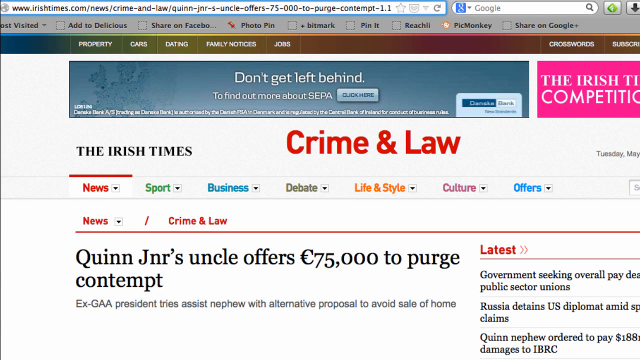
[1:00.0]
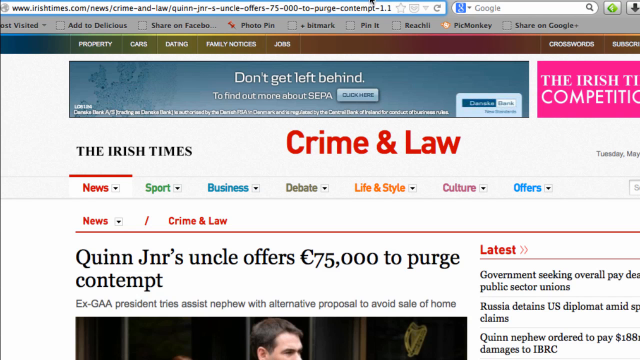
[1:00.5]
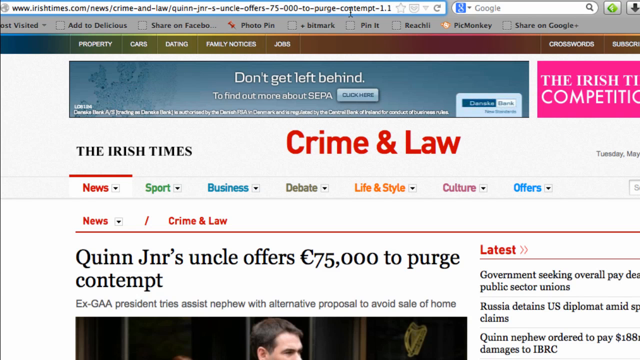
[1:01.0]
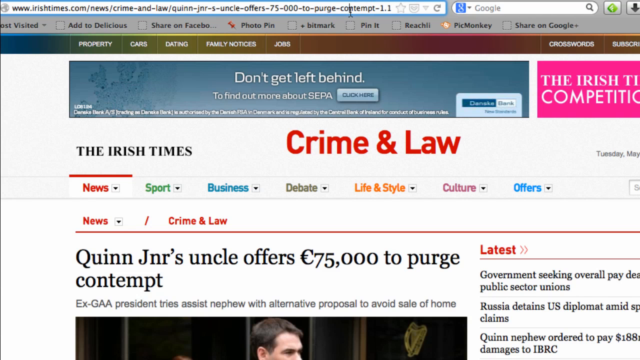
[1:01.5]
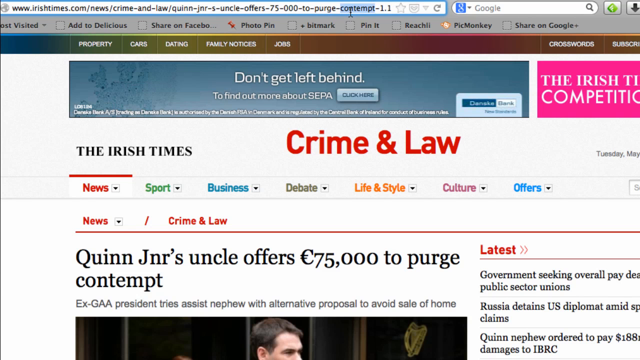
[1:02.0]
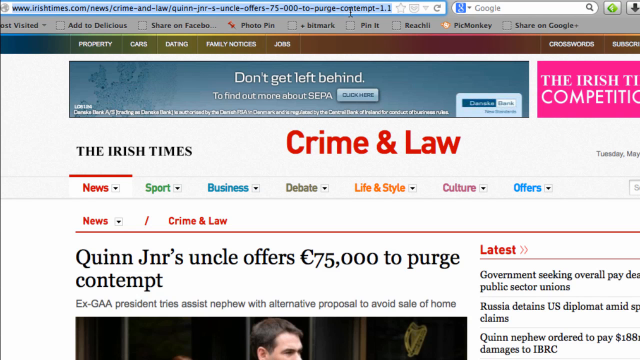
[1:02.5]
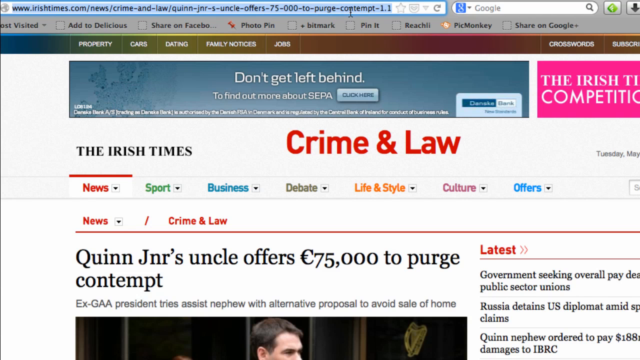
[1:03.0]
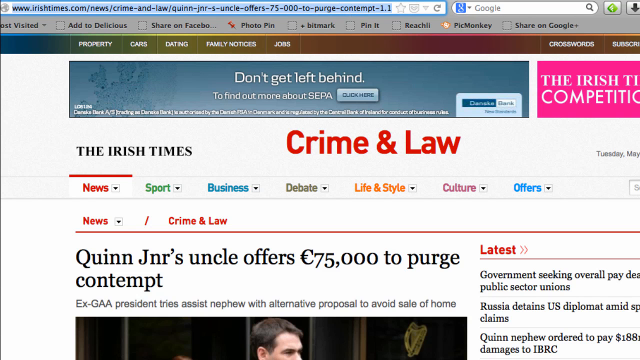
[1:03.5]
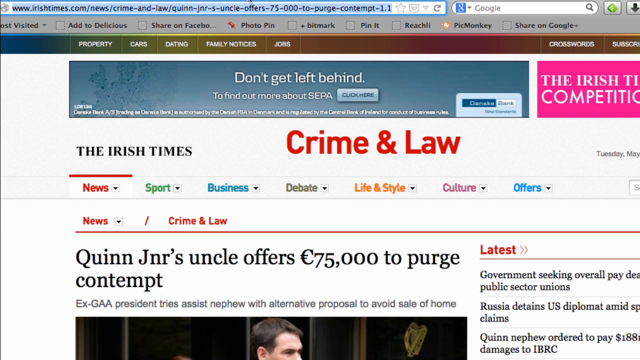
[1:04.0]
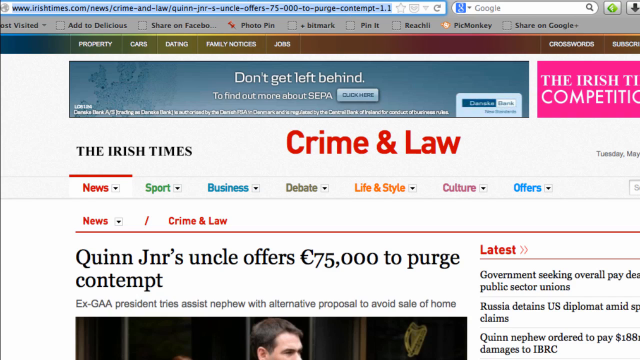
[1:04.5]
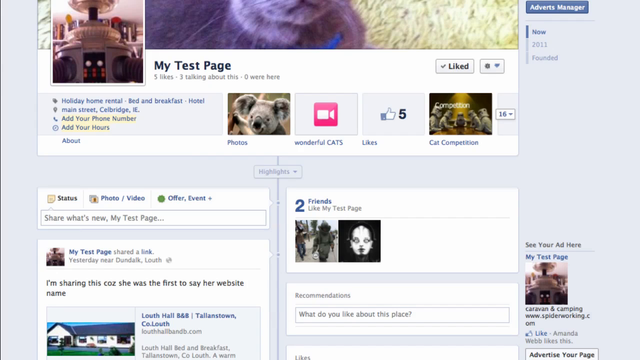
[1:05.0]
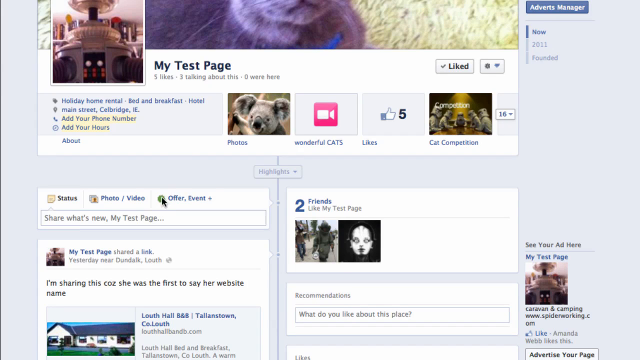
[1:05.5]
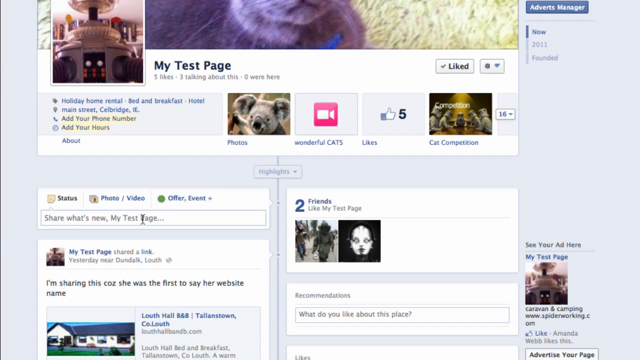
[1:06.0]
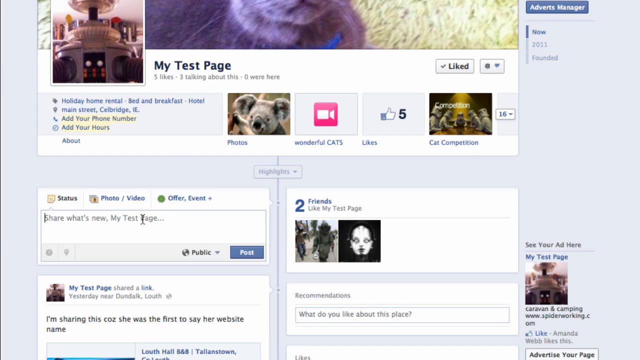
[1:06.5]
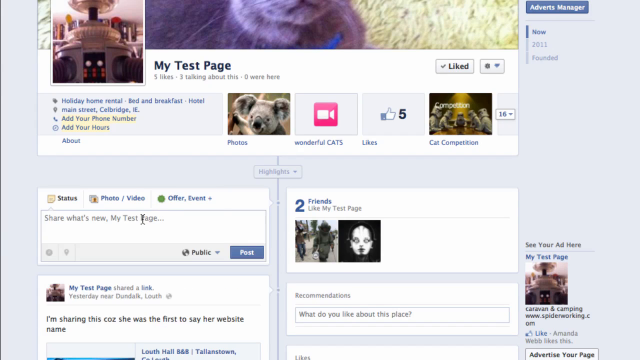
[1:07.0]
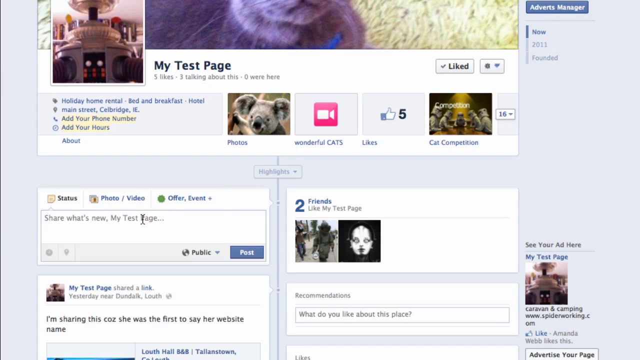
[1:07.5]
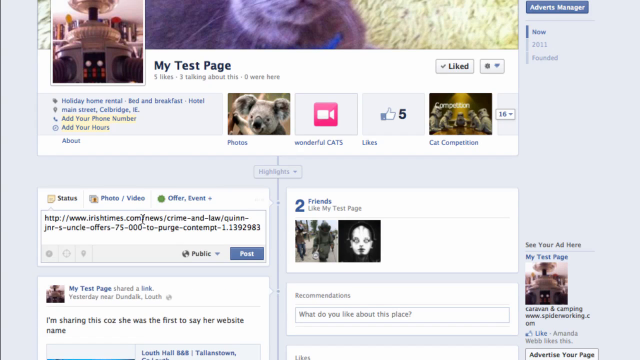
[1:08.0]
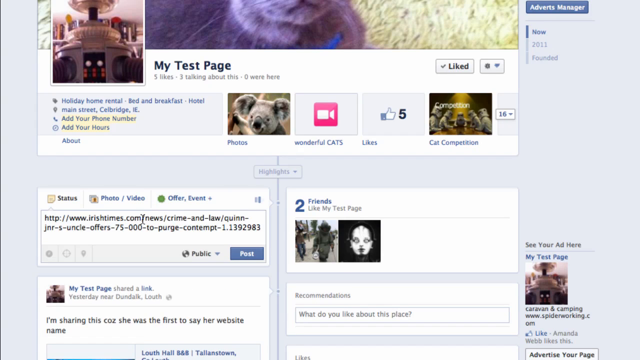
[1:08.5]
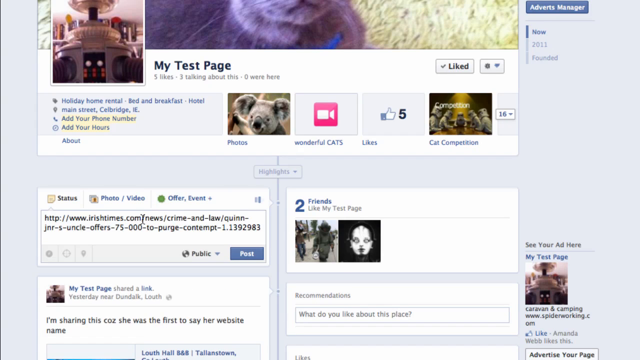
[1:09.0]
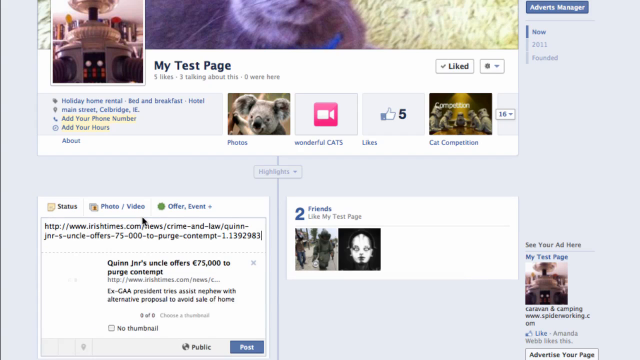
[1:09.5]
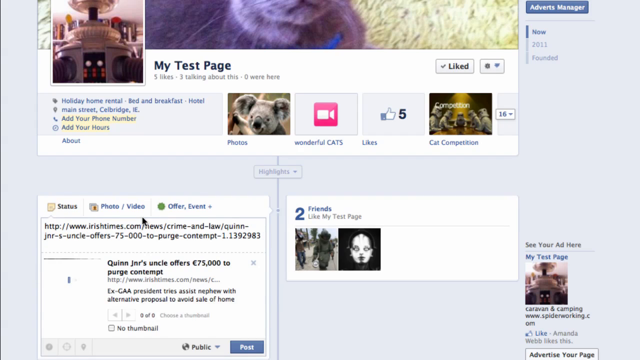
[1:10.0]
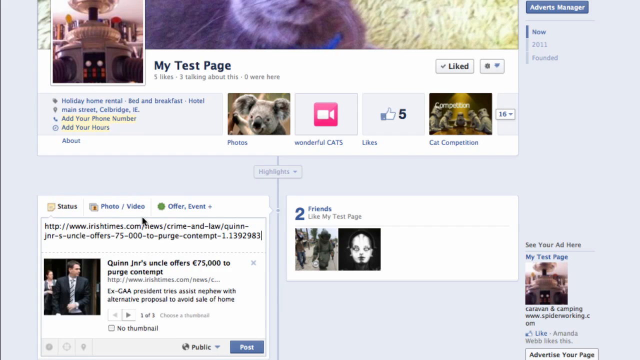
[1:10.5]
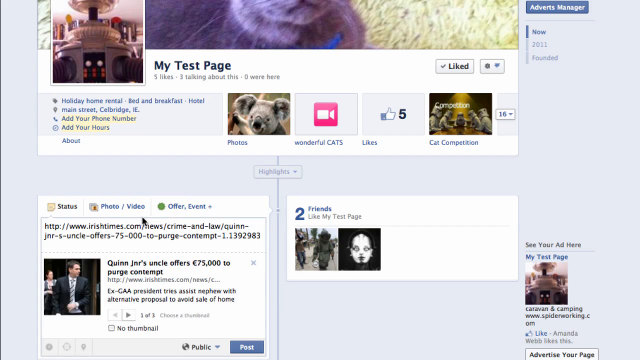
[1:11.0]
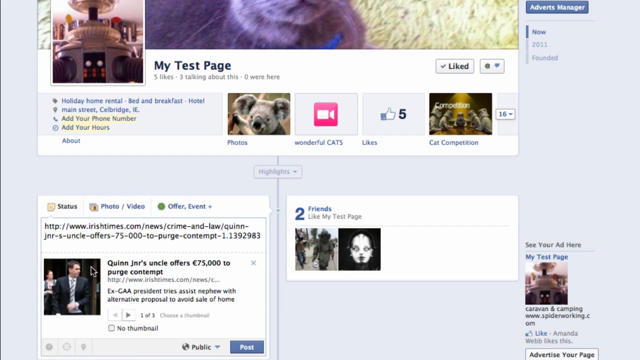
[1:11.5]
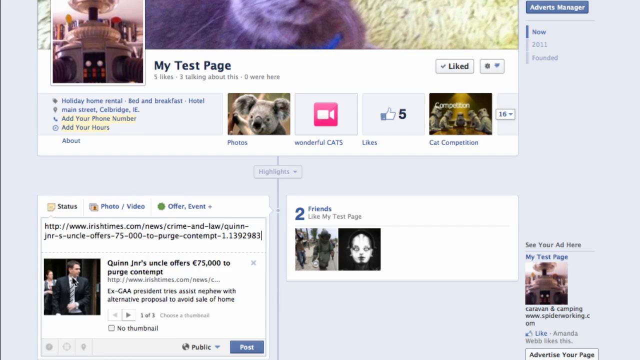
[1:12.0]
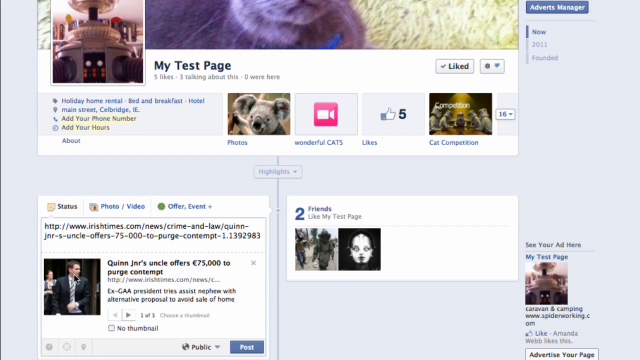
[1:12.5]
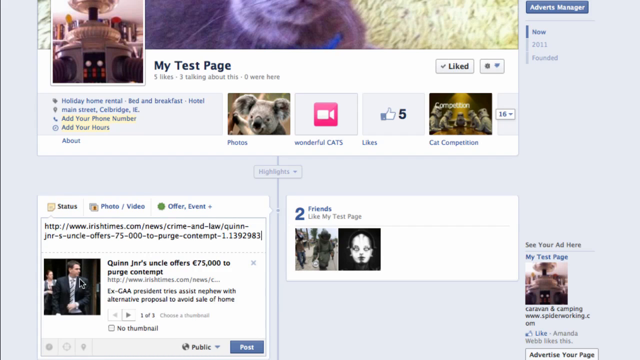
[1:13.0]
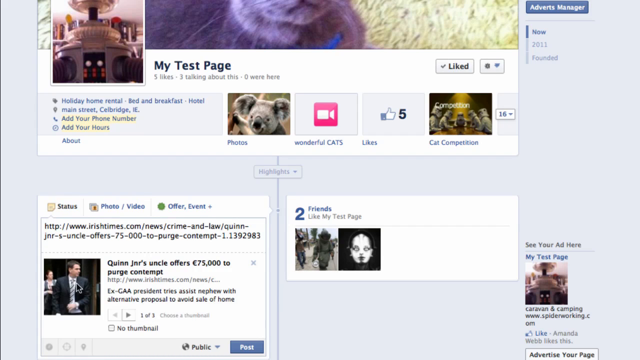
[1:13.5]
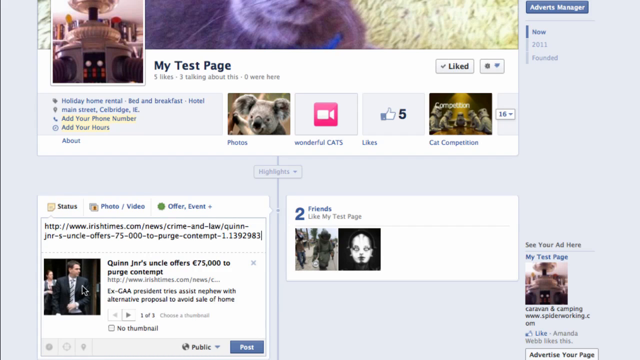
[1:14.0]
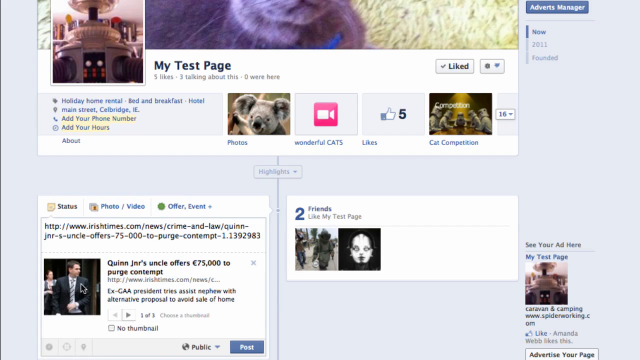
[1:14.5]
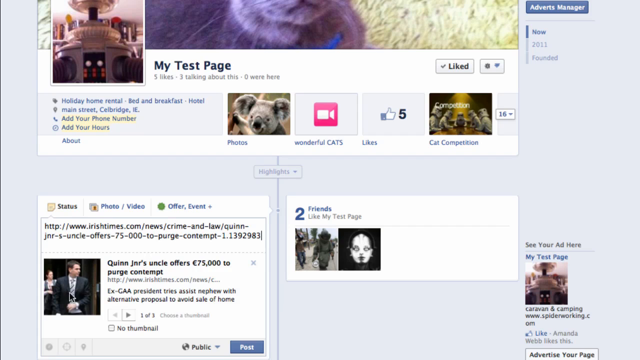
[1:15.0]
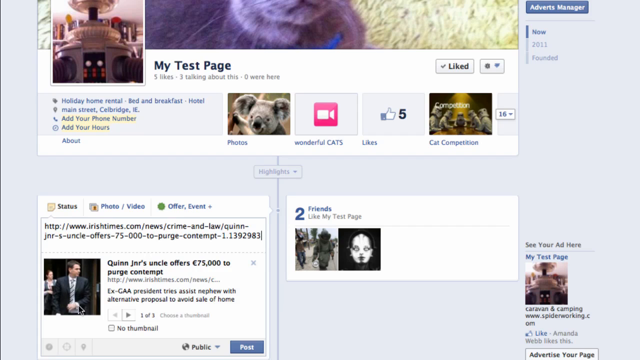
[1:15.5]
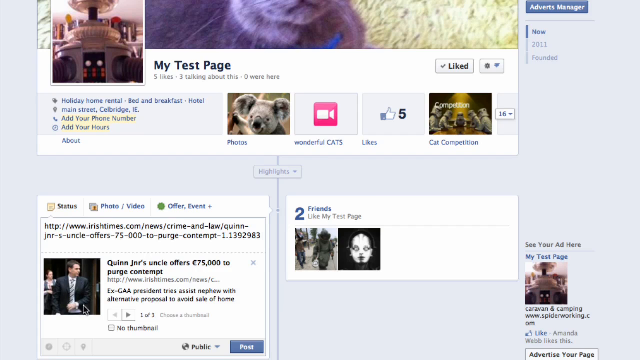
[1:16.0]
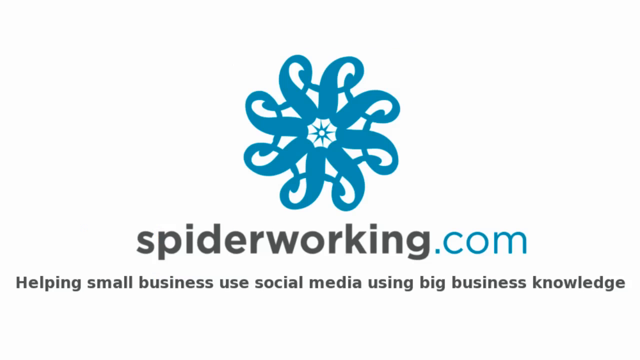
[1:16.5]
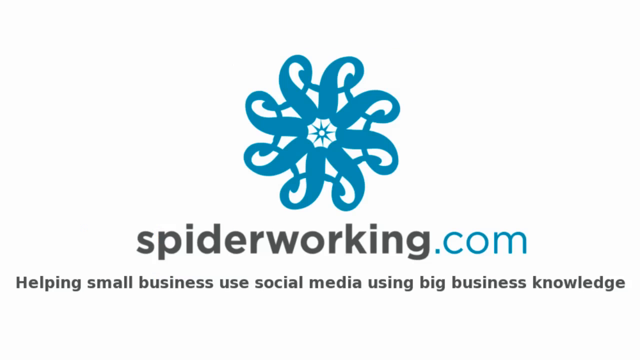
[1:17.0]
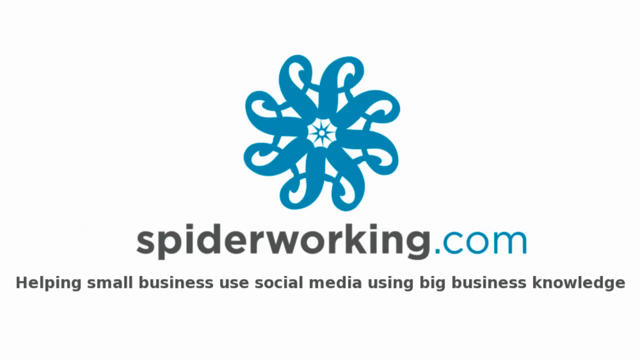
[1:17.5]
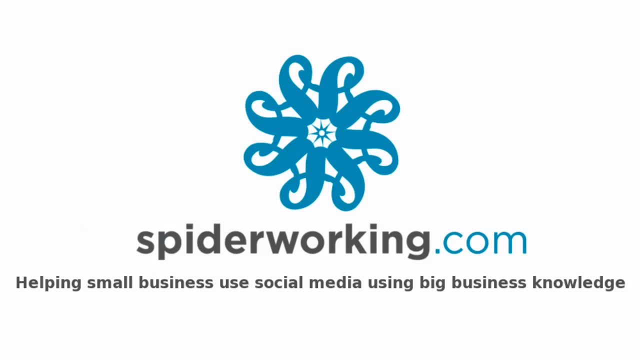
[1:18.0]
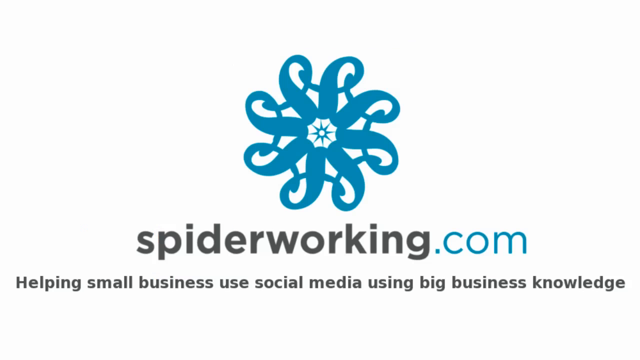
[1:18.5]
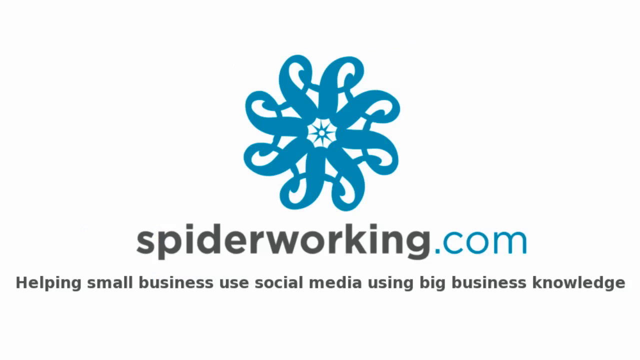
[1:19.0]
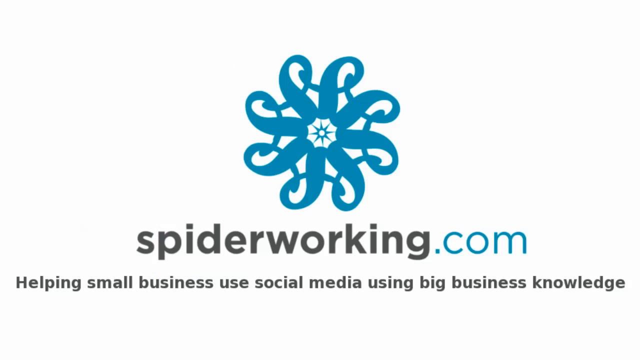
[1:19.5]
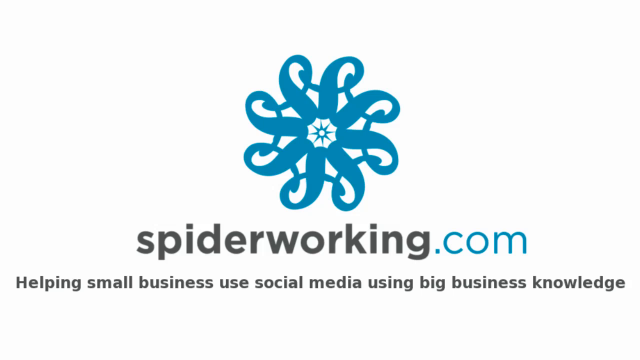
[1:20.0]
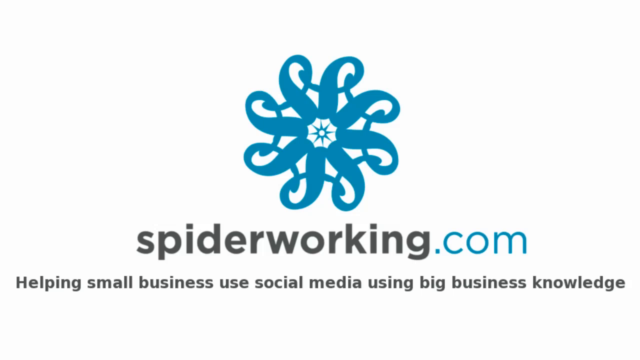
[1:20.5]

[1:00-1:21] A test page shows the Facebook developers debug tool. Sections on it include "open graph warnings that should be fixed", "object properties", "raw open graph document information" and "objects of this type do not follow", along with Twitter accounts, and further down "status of photo, video of an event". The mouse points at a person wearing a suit. An Irish Times page shows the menu items "News", "Sports", "Business", "Crime", "Law" and "World", and a headline about an offer of £75,000. Text for Spiderwaking.com reads "helping small businesses use social media using big businesses' knowledge". An Irish Times crime and law item is also visible.